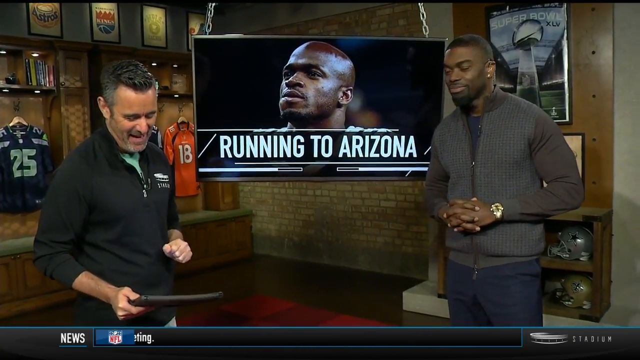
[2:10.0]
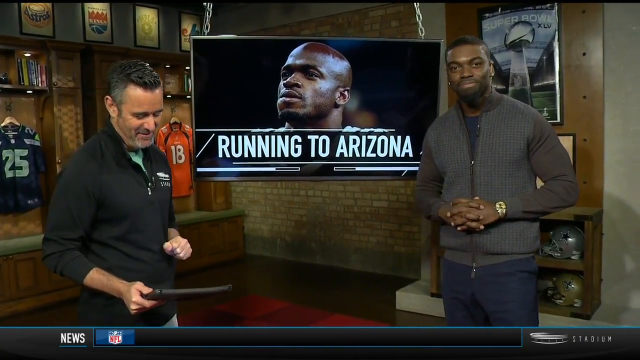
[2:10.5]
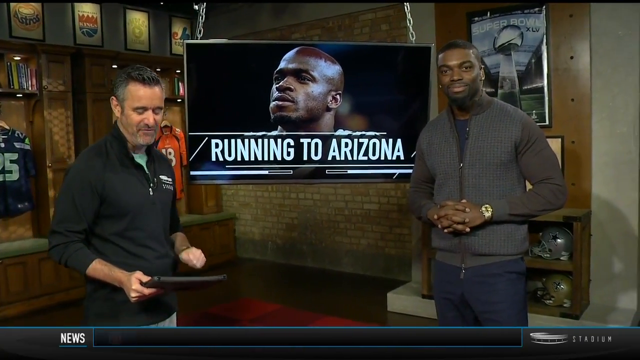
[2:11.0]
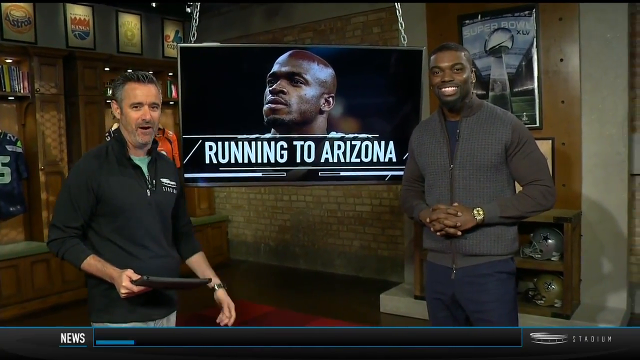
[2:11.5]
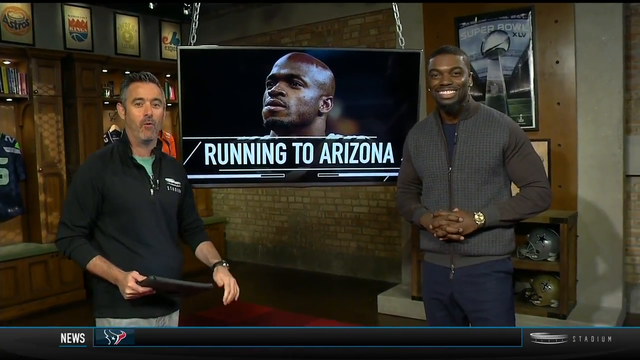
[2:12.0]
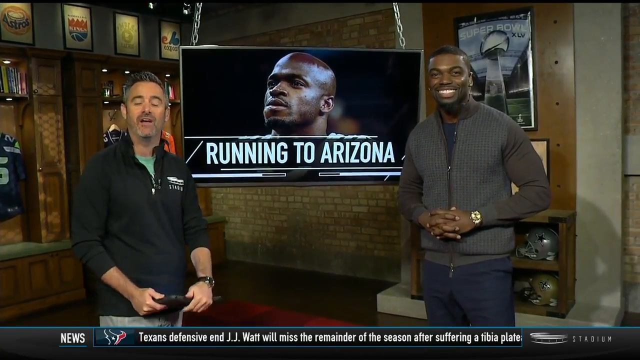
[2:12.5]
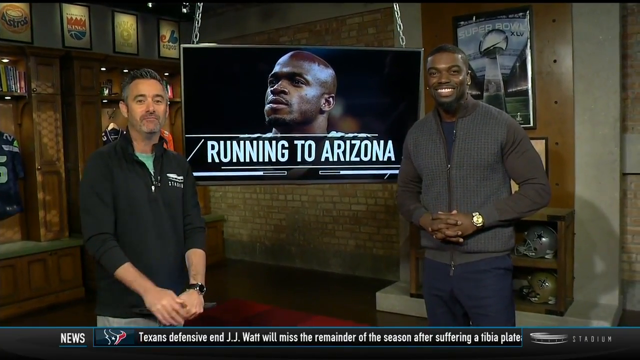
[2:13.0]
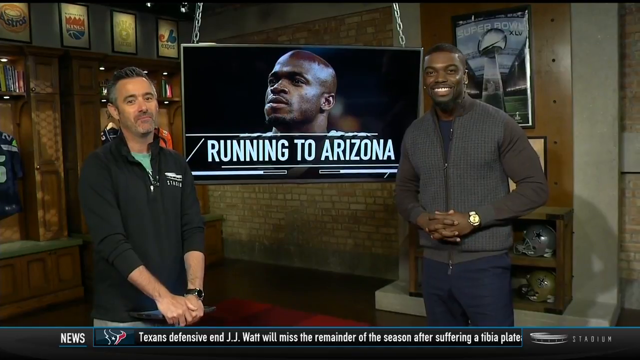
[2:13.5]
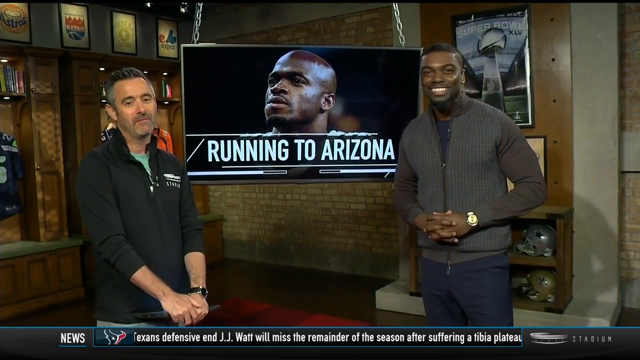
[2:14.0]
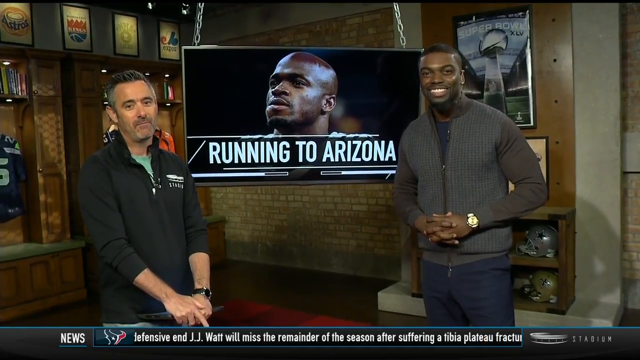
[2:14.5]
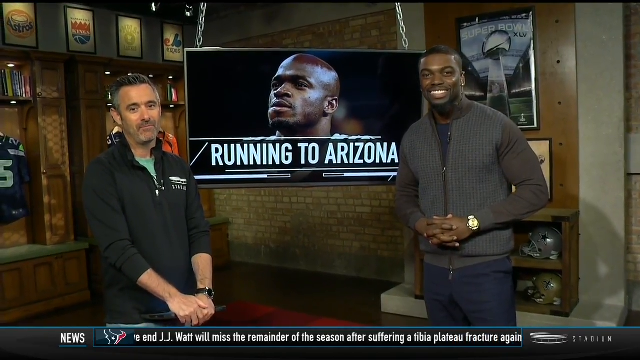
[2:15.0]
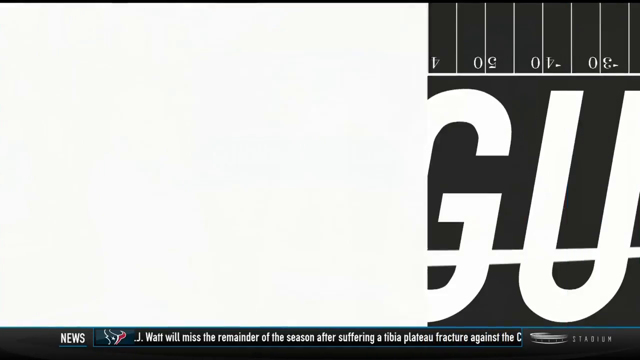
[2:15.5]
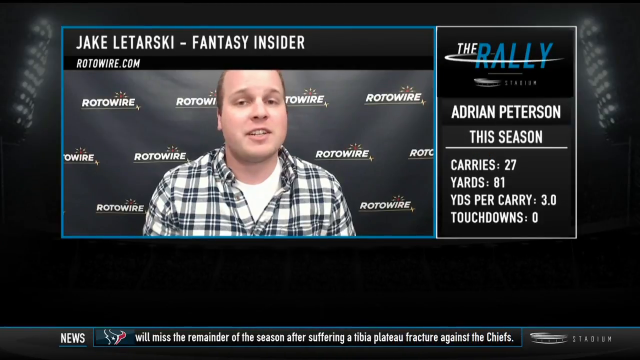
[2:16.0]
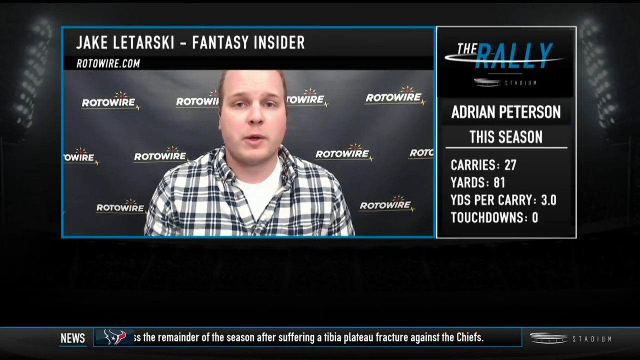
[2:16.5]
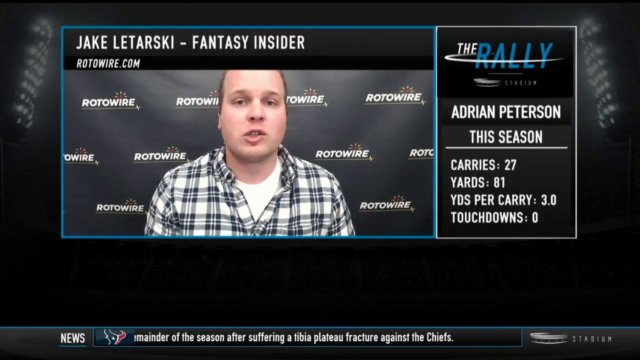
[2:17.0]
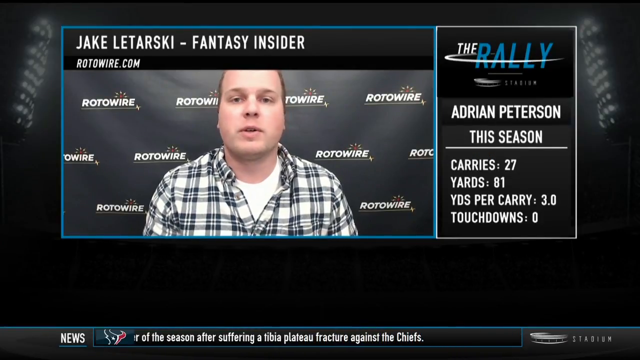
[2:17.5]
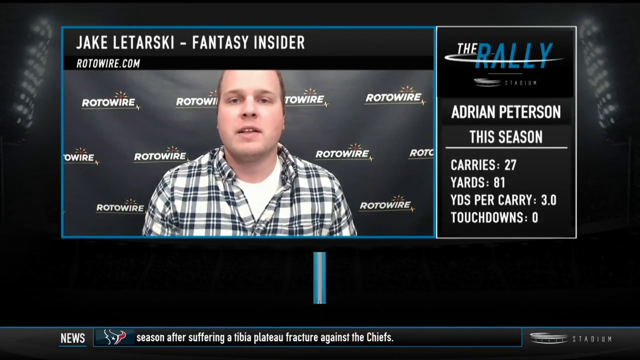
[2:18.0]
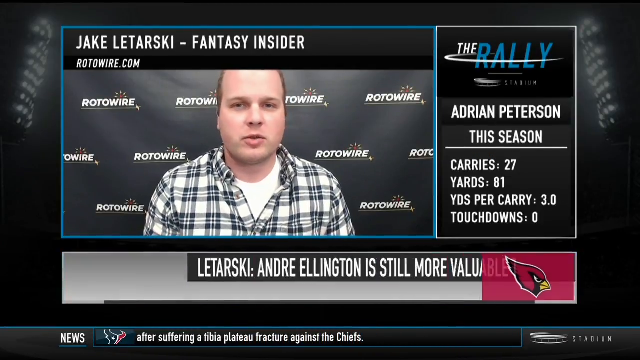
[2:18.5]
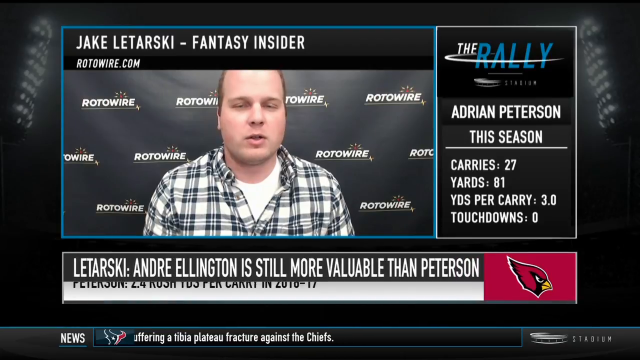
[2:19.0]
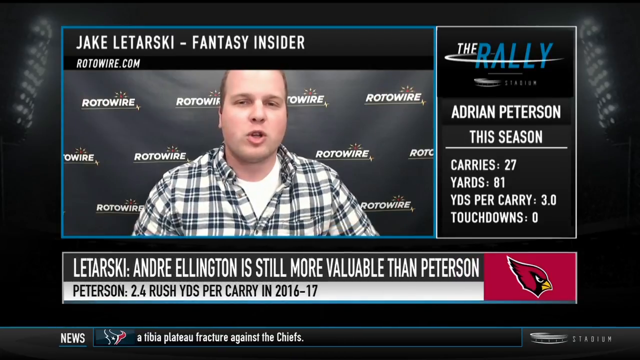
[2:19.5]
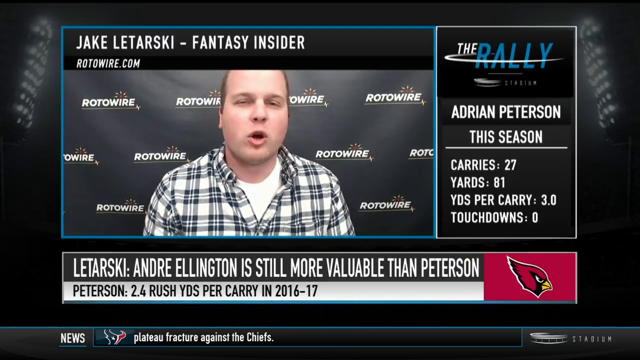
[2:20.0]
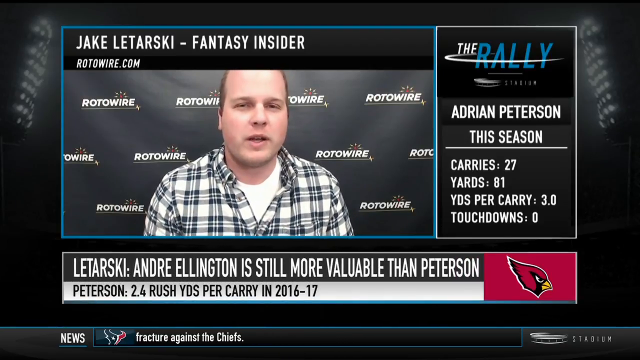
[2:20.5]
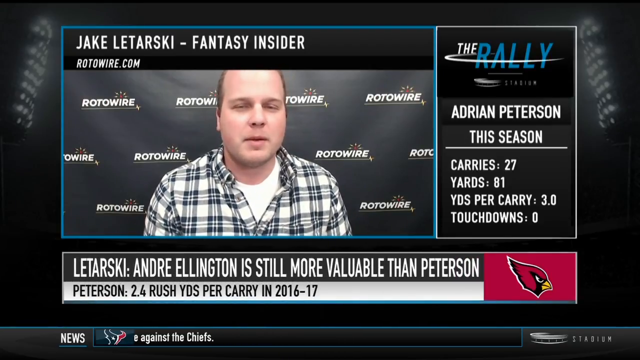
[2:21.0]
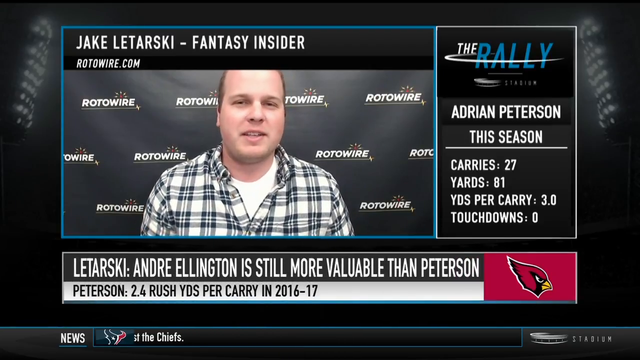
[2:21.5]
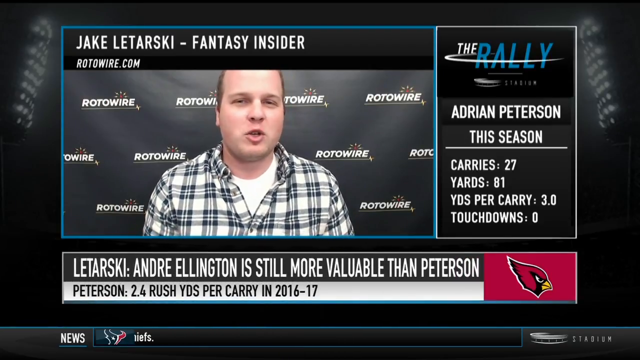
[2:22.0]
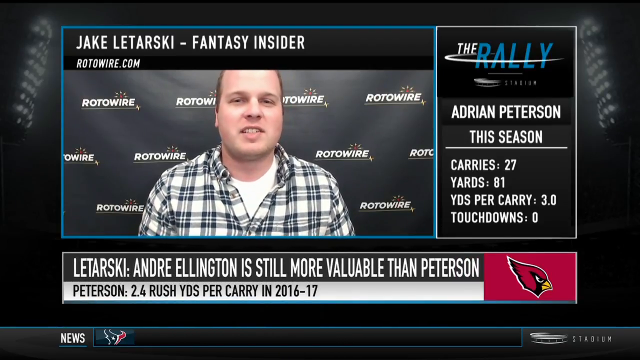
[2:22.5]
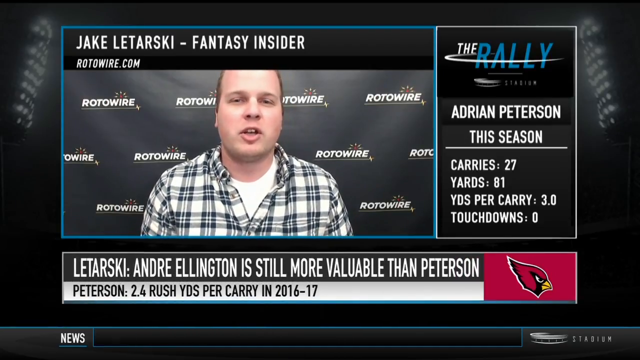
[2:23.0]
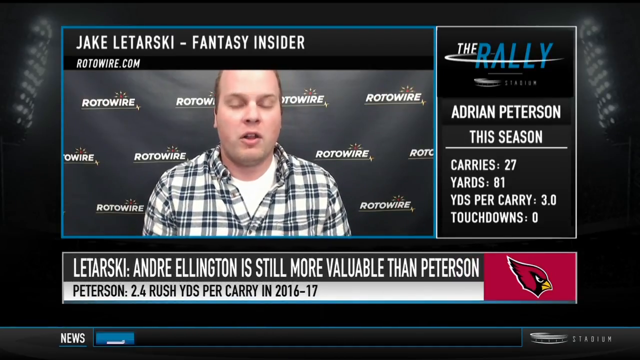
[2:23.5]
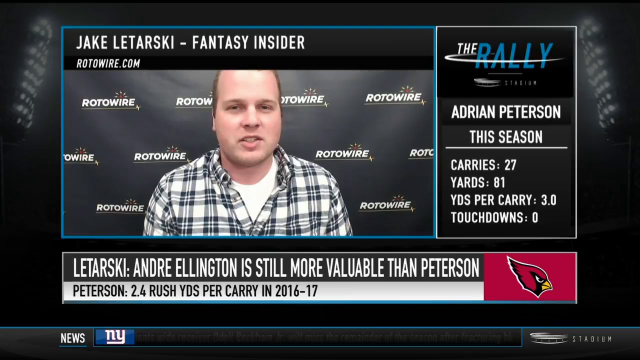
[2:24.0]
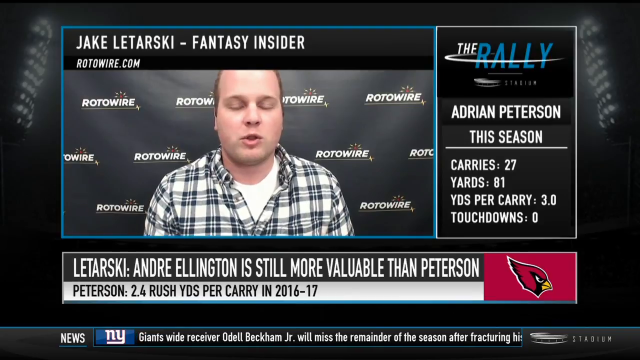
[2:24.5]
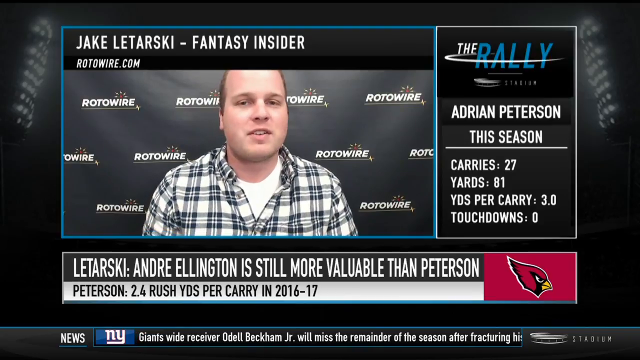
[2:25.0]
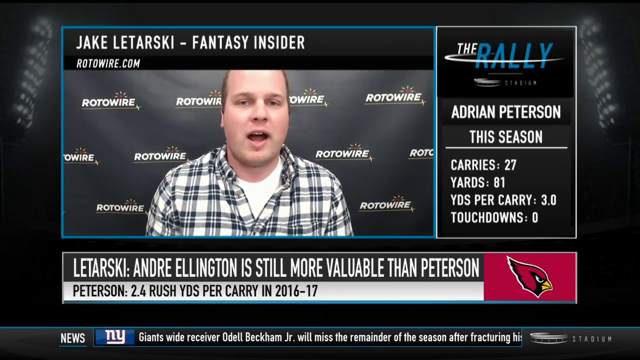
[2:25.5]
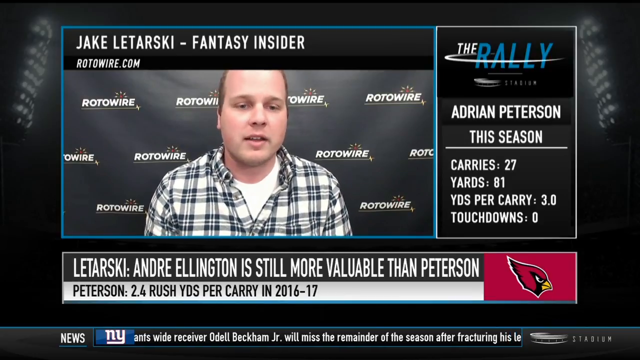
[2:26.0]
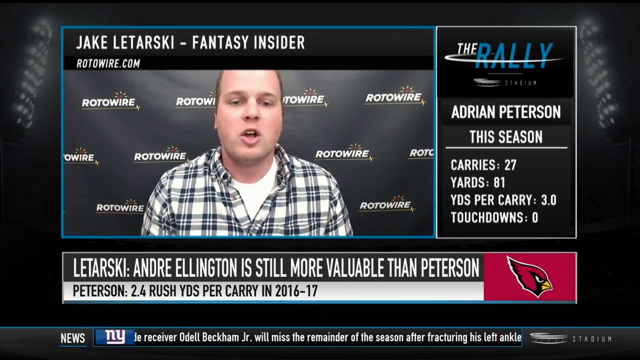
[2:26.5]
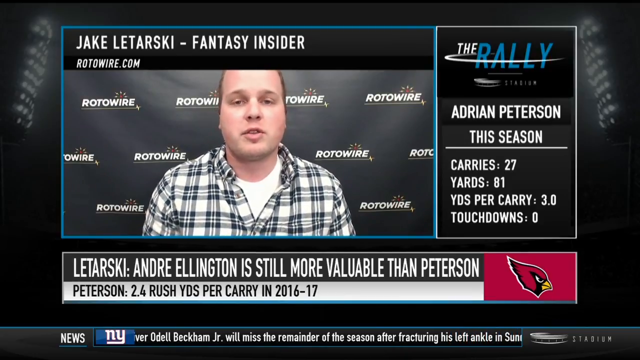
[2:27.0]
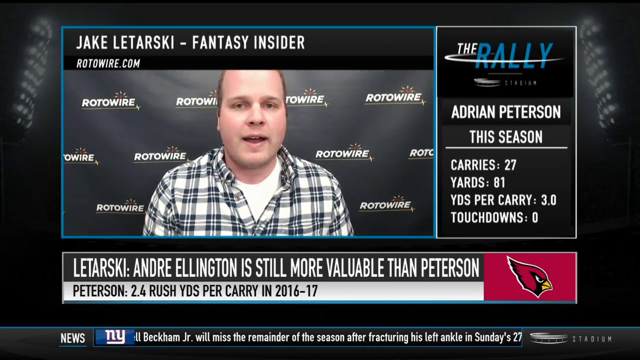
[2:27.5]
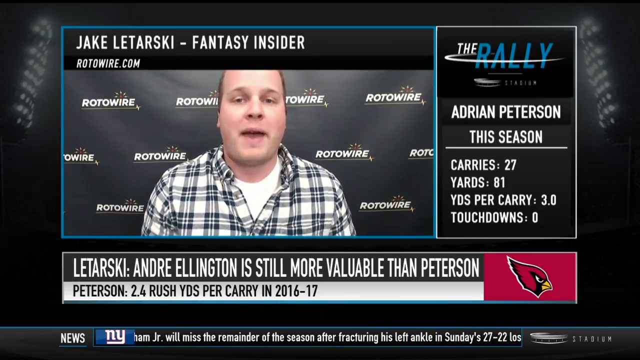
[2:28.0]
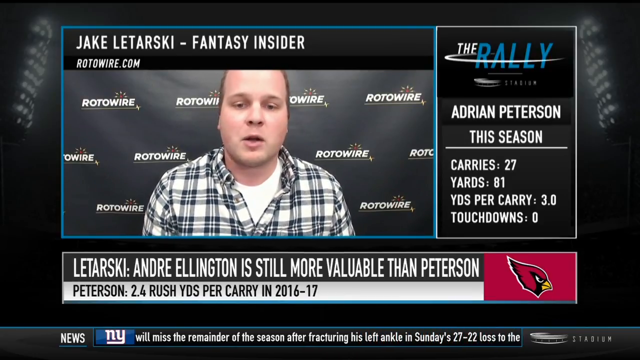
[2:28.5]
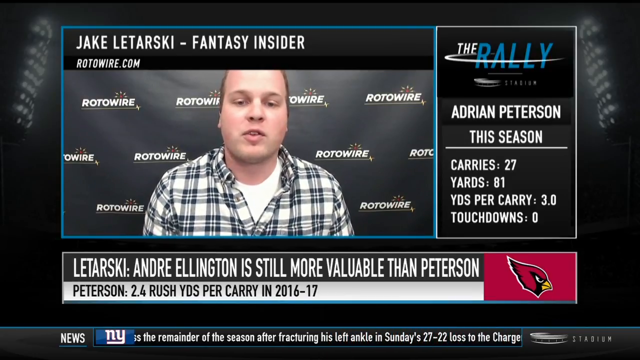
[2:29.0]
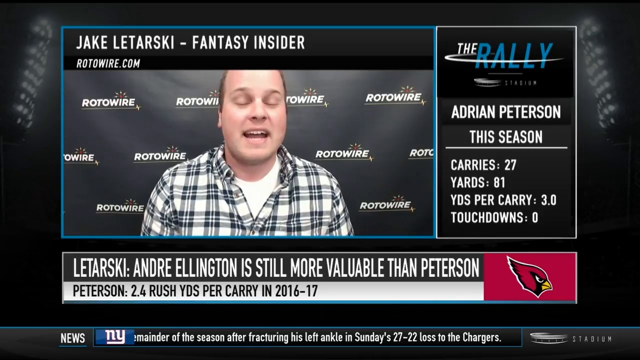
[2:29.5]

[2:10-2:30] The two sports commentators are still talking, with the ticker of stats continuing at the bottom. The video then cuts away to focus on one man, apparently another reporter, in a chest-up view in front of an all-black background with "Roto-Wire" in white caps. He is Caucasian, looks like he is balding, maybe about 40 years old, and wears a black-and-white plaid button-down shirt over a white t-shirt. Above him, a black banner reads in white "Jake Letarski - Fantasy Insider," with "Roto-Wire.com" underneath. On the right is a logo that says "The Rally," the same logo seen earlier, with a lot of white text below it showing statistics about Adrian Peterson. Beneath his video, a black banner reads "Letarski; Andre Ellington is still more valuable than Peterson," and below that a gray text box reads in black "Peterson, 2.4 rush yards per carry in 2016-17," with a red Cardinals logo on the right of that box. He is seen from the front, moving his head a little as he talks.